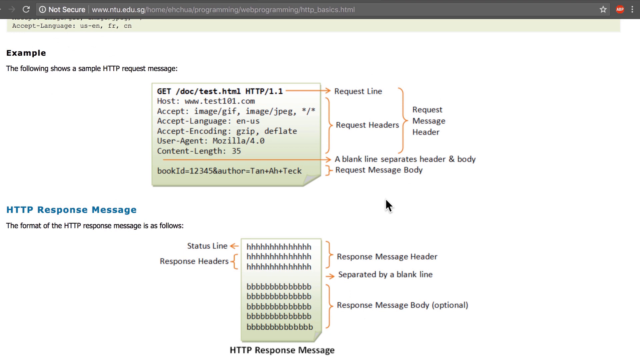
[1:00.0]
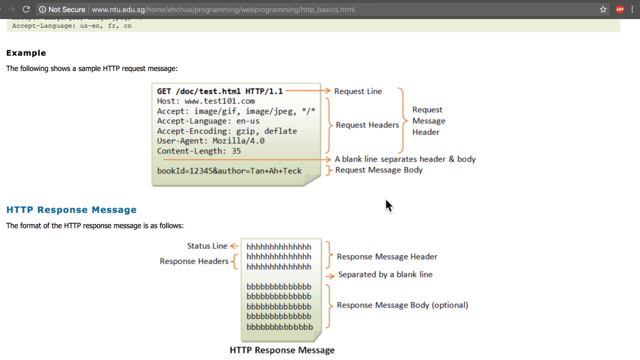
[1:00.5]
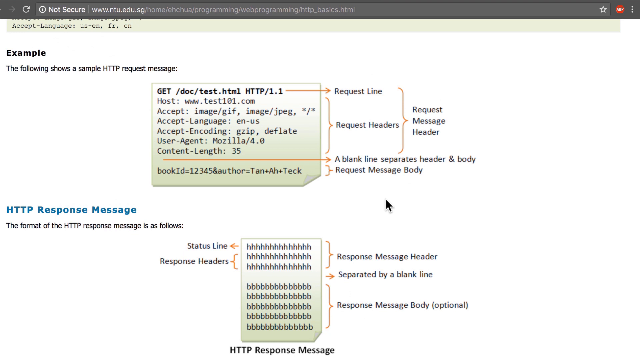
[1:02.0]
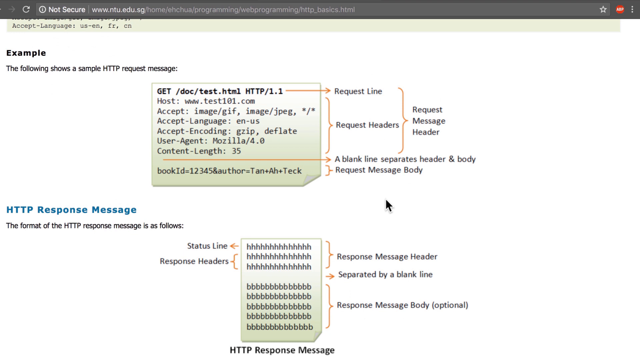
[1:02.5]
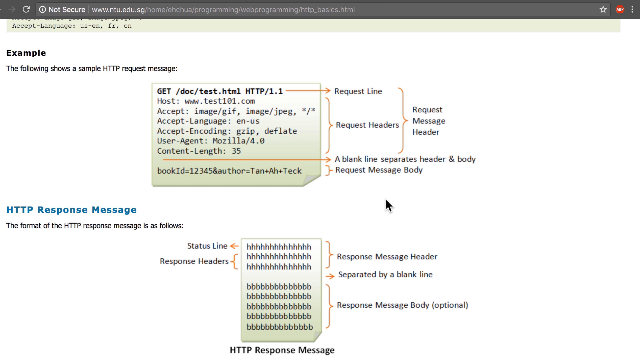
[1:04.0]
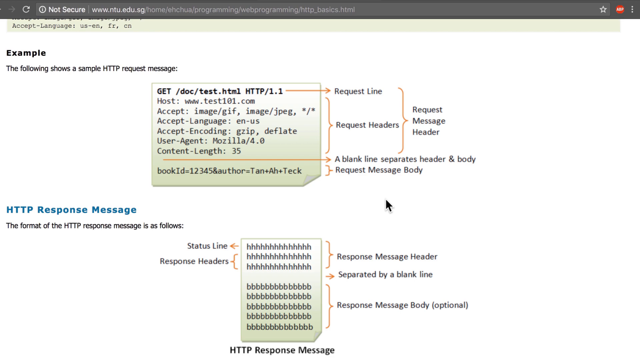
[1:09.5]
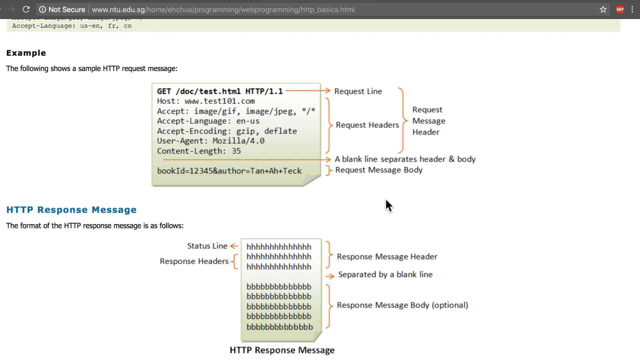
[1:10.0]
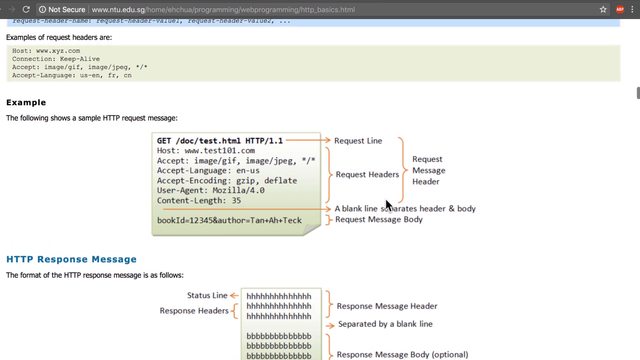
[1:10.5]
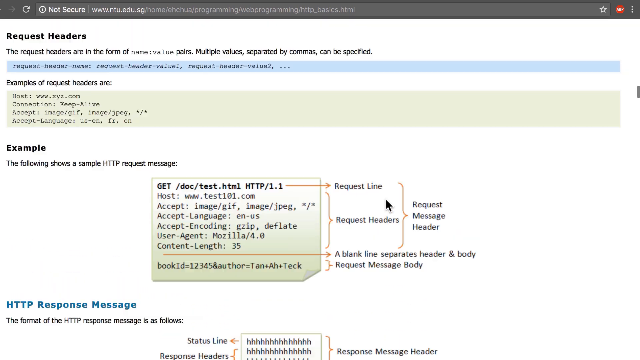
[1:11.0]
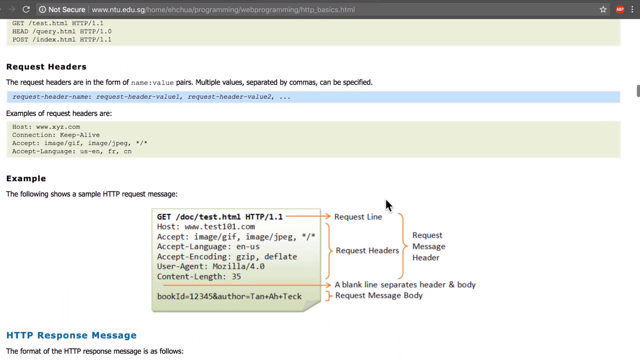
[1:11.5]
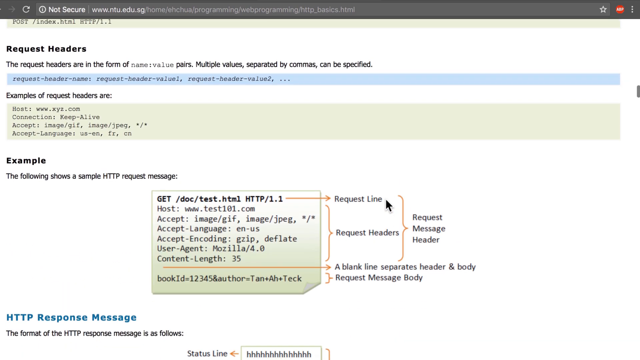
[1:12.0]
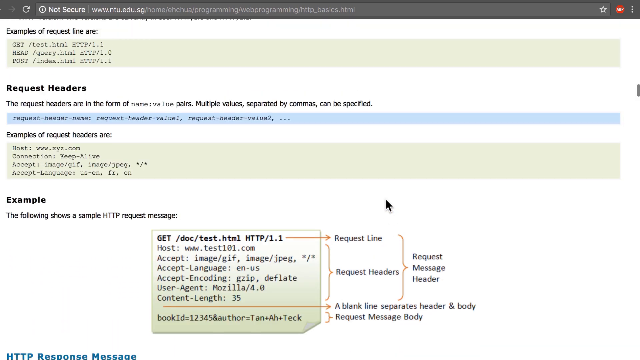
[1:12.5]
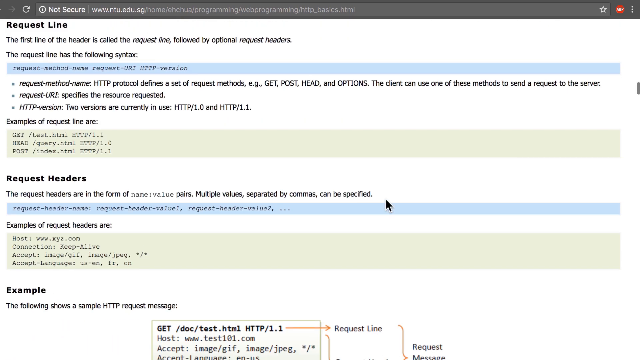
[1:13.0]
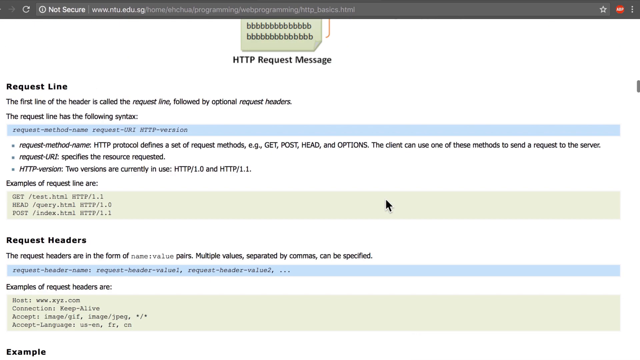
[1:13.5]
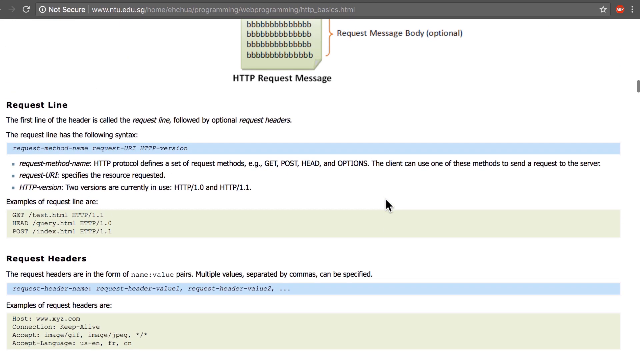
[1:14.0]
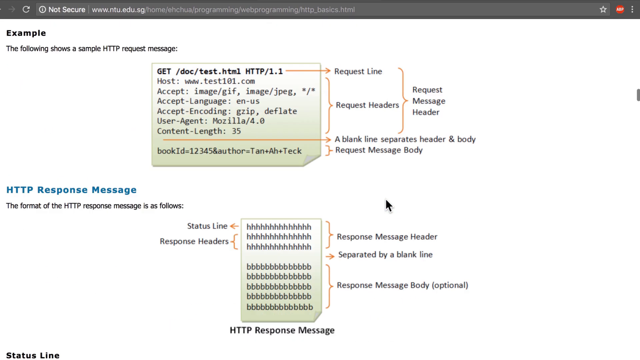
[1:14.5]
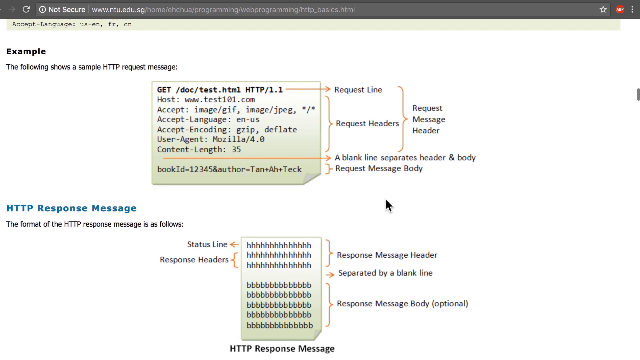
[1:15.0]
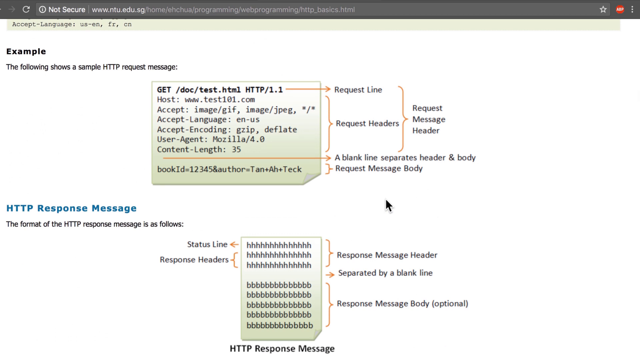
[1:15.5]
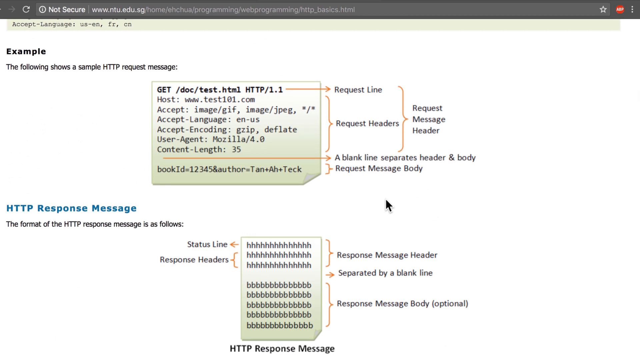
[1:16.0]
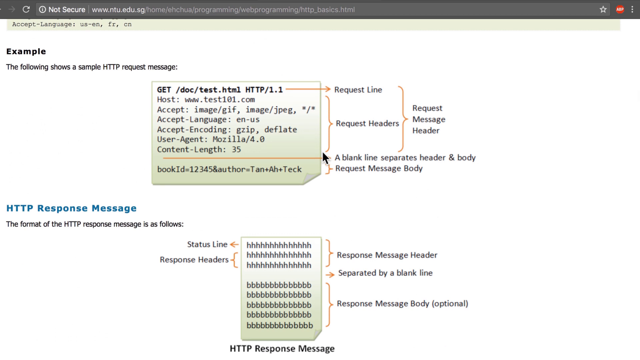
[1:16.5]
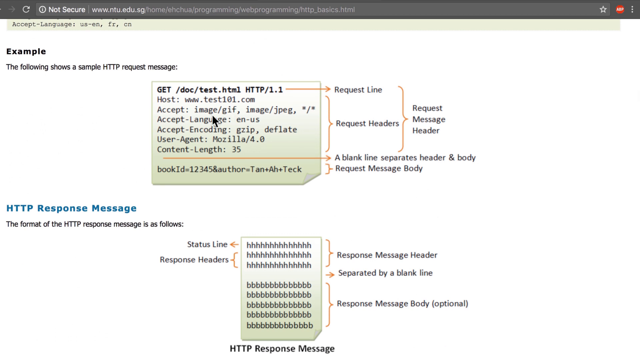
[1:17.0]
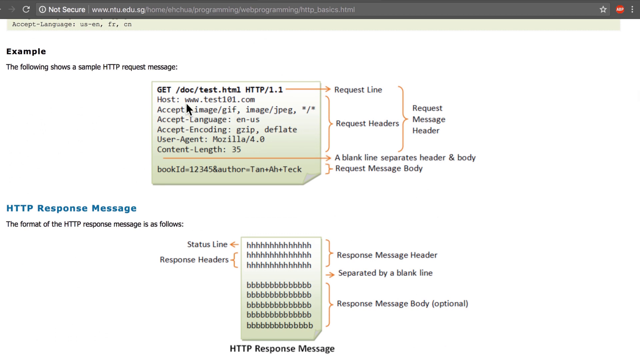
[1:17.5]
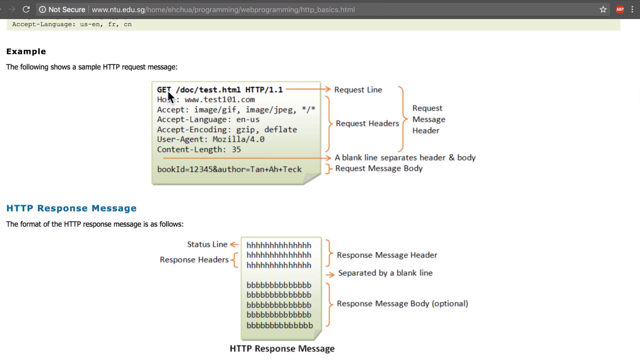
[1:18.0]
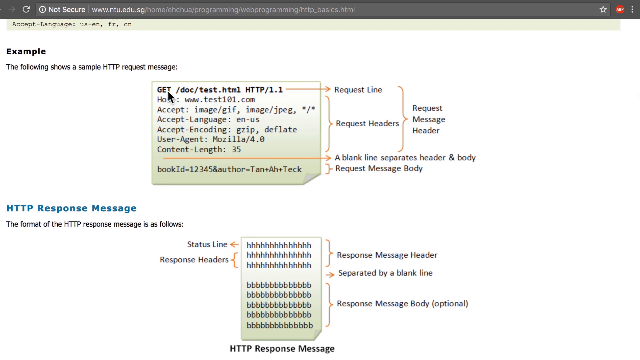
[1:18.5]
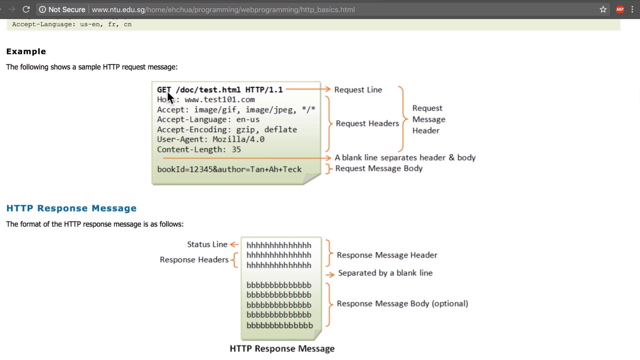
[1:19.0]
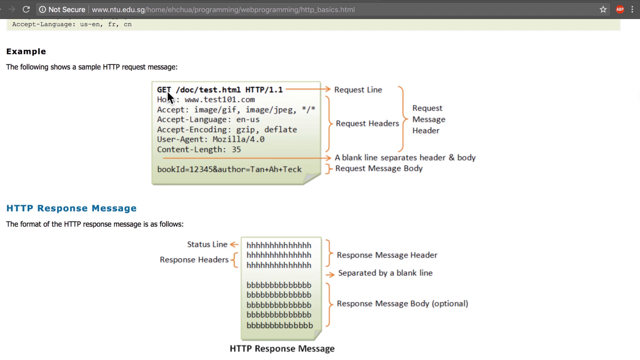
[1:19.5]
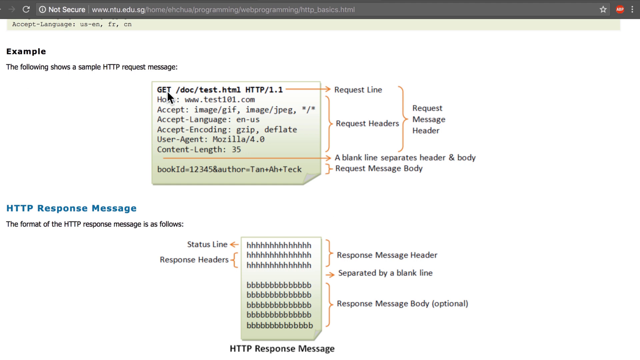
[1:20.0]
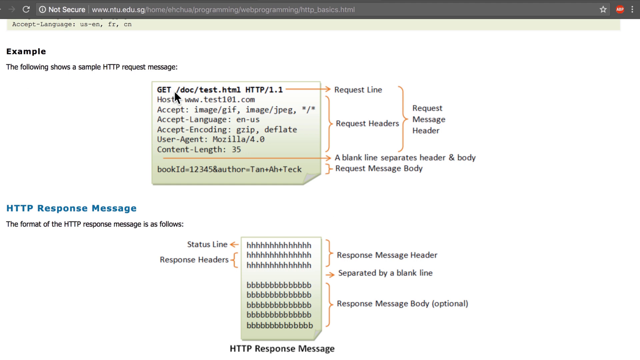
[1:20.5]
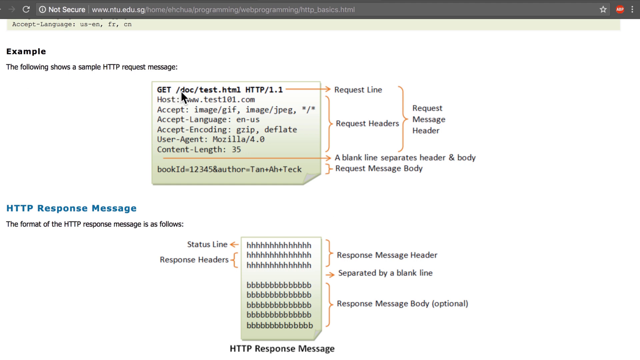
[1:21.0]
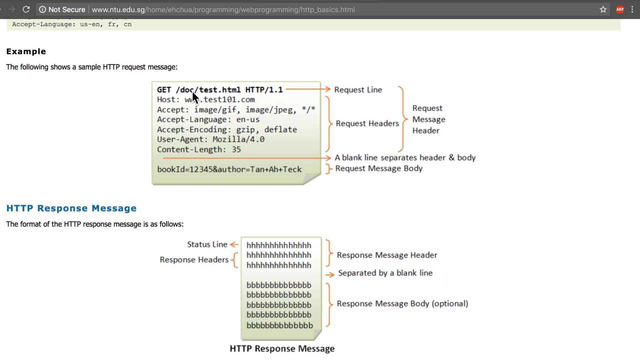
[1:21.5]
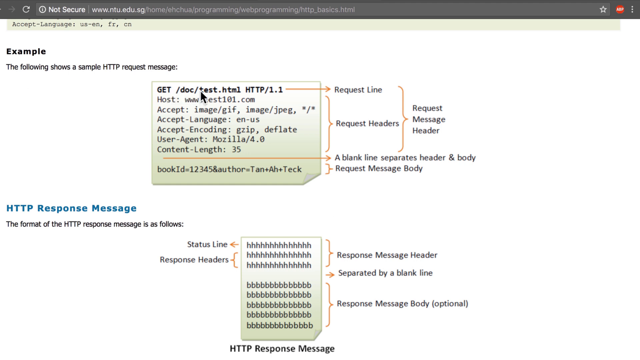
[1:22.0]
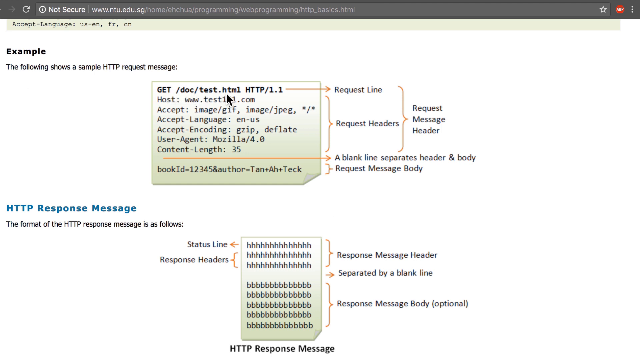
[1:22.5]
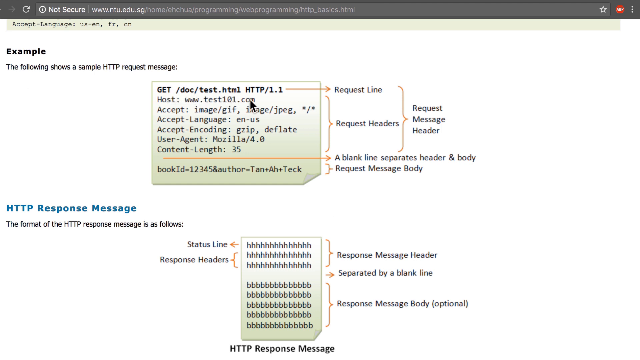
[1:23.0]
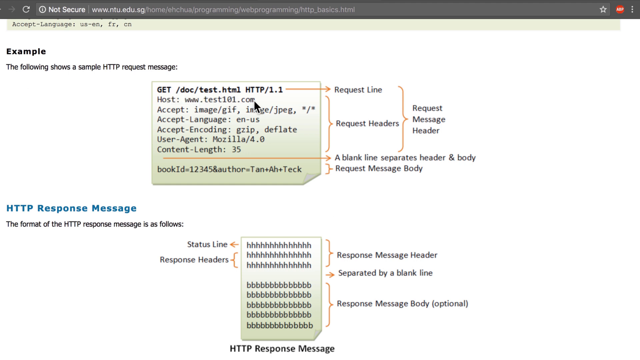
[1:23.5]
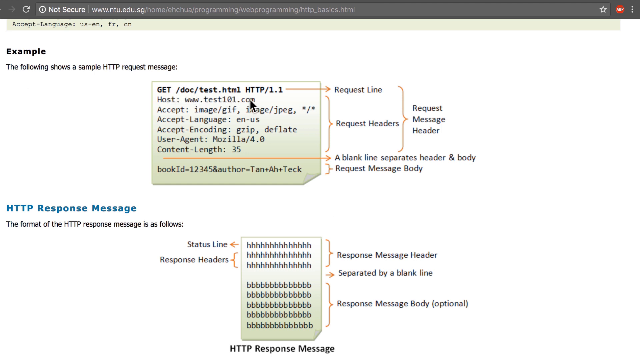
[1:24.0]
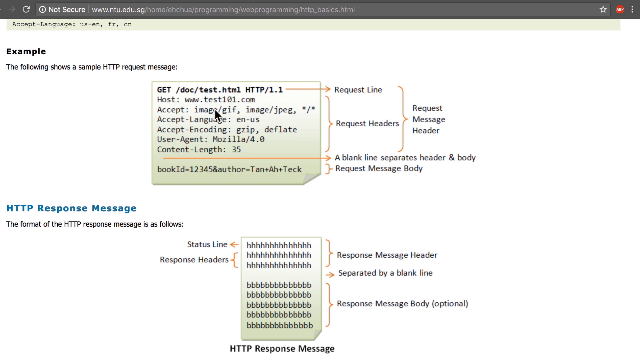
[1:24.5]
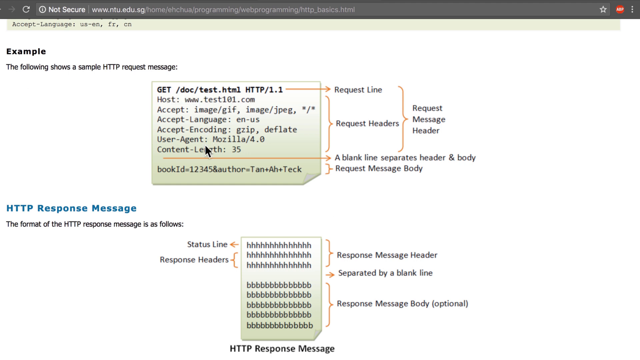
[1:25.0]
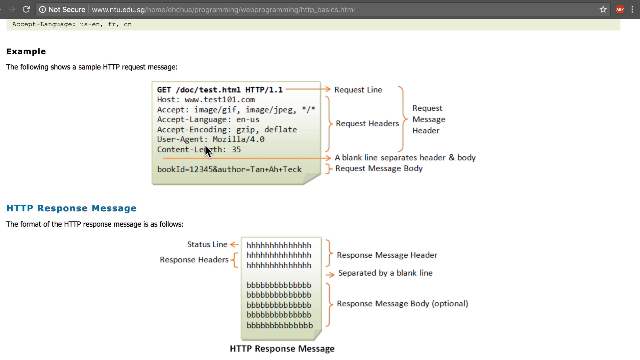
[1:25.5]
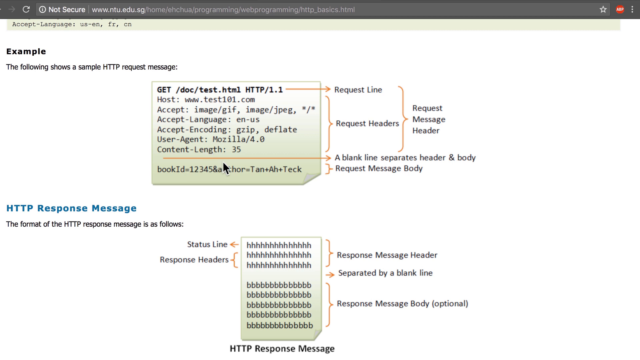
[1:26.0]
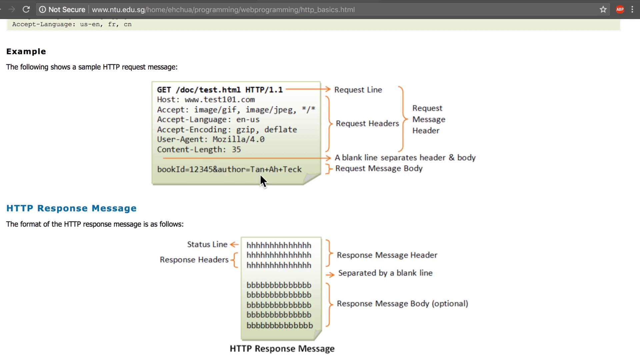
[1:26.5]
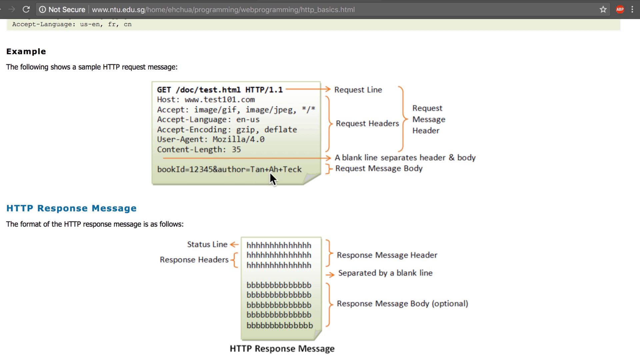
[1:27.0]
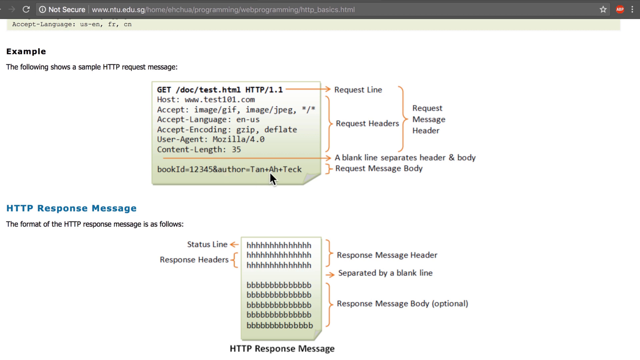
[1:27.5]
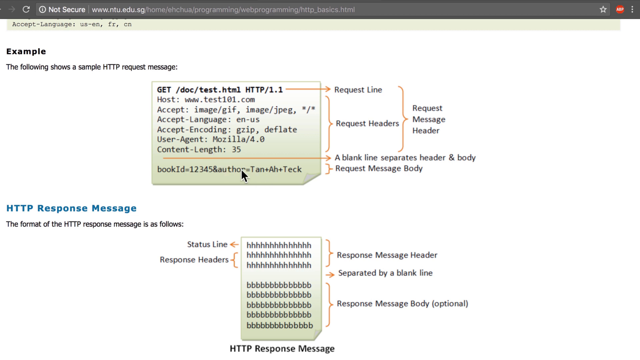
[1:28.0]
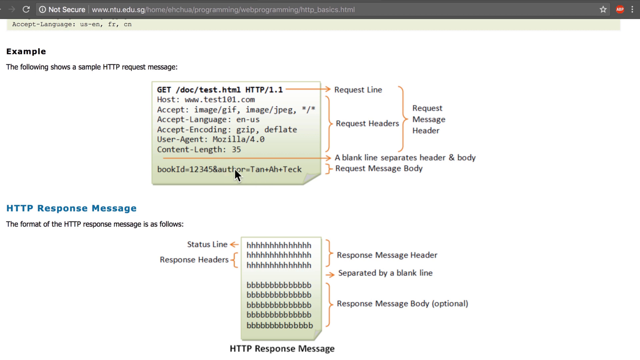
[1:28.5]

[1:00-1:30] The page has a black and white background. At the top, a little of some remaining script is visible, followed by the word "example" and, underneath, "the following shows a sample HTTP request message." A small box shows an HTTP request with a request line, a request message header, a blank line separating the header and the body, and the request message body. Beneath it, "HTTP response message" appears, showing the response coming back as Hs and Bs. At first the narrator does not move the mouse much; he then scrolls up and down the screen a little over the request lines, the part reading "get dot test HTML," the website and content, and a transaction ID at the bottom.